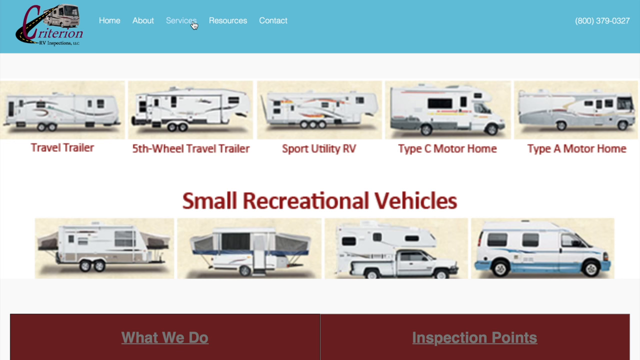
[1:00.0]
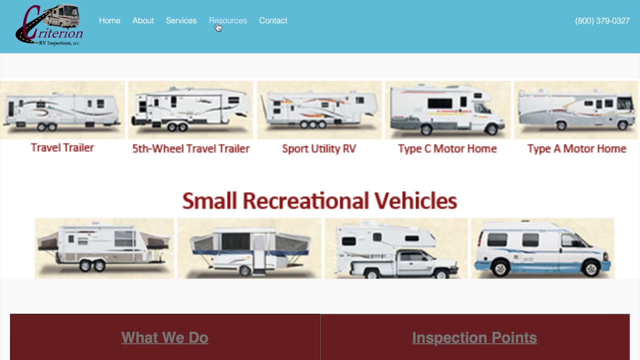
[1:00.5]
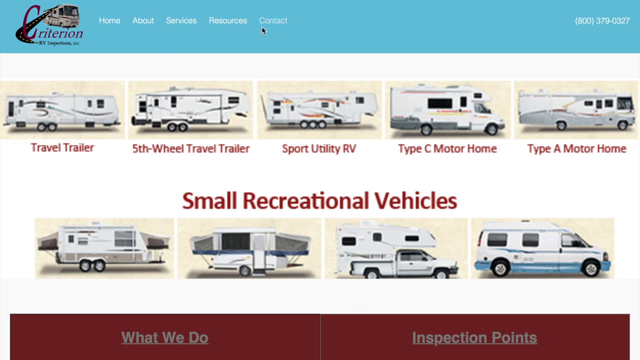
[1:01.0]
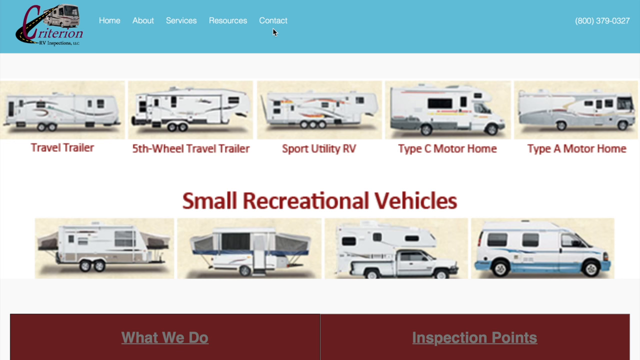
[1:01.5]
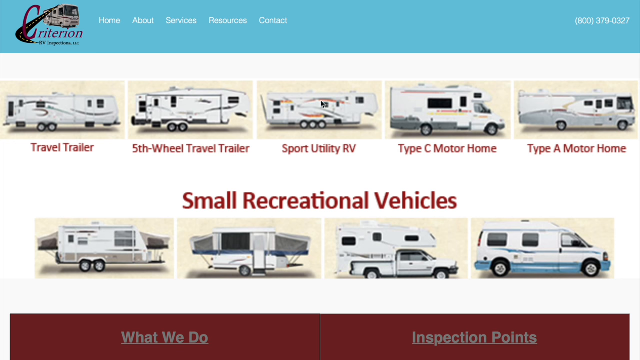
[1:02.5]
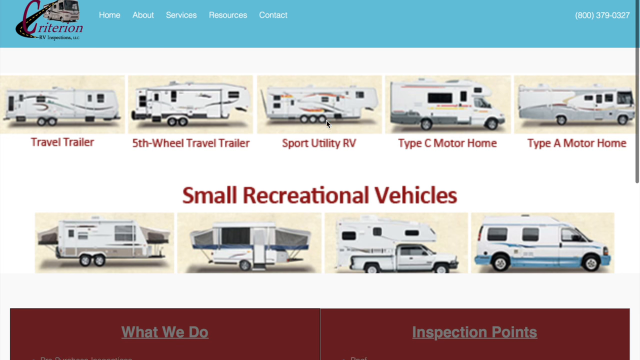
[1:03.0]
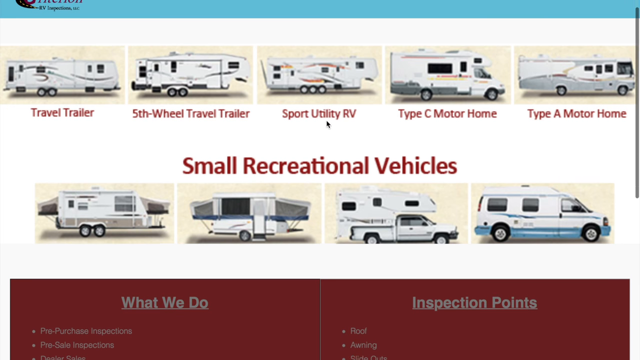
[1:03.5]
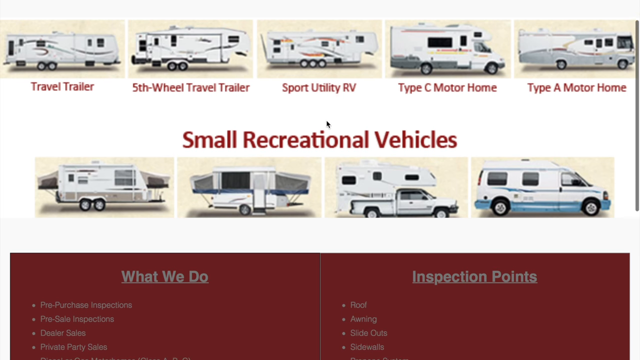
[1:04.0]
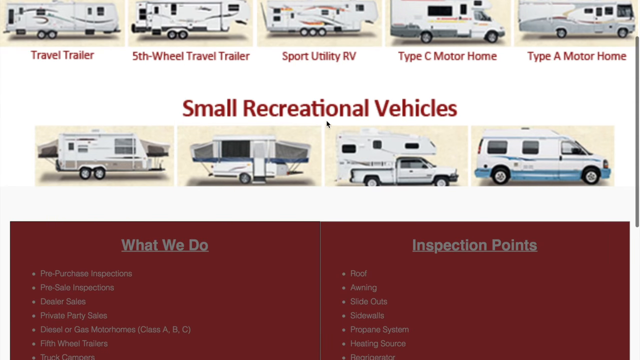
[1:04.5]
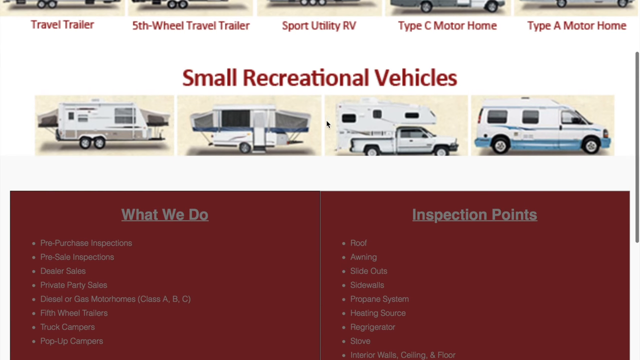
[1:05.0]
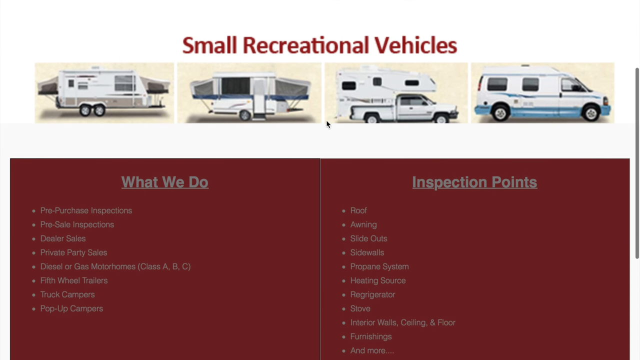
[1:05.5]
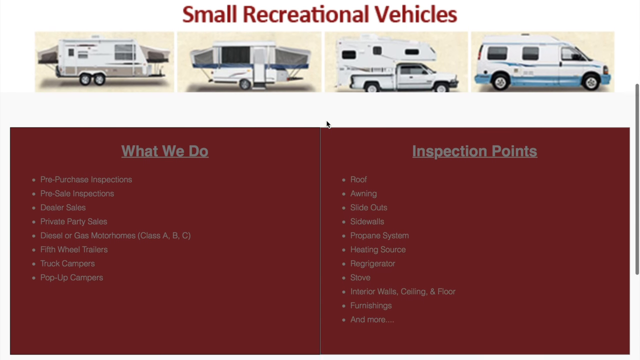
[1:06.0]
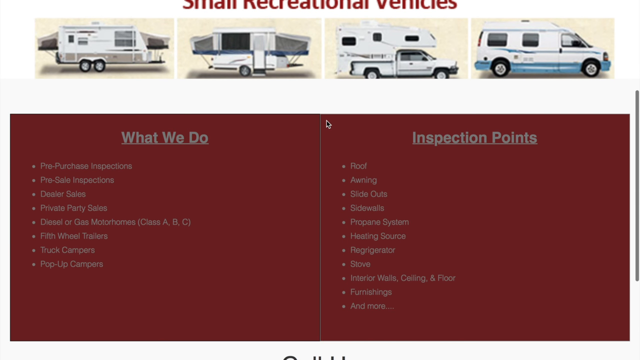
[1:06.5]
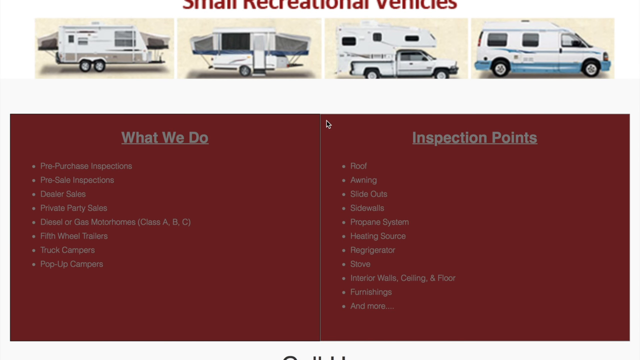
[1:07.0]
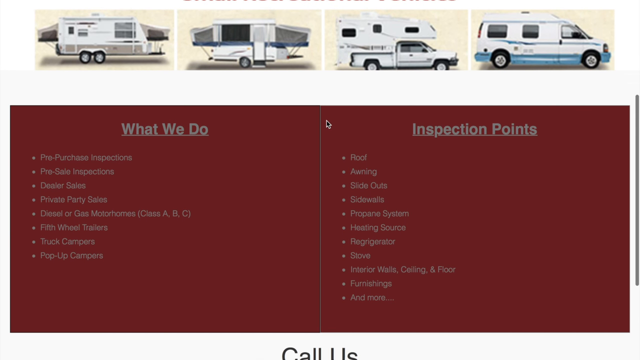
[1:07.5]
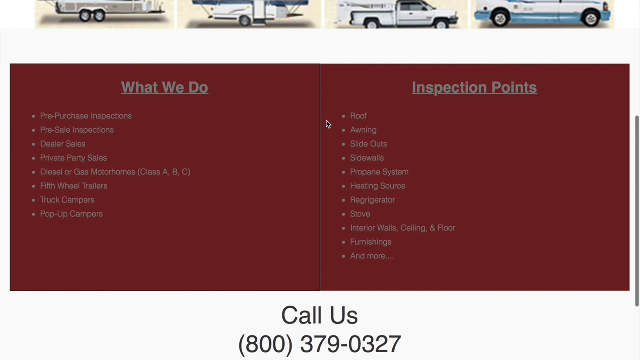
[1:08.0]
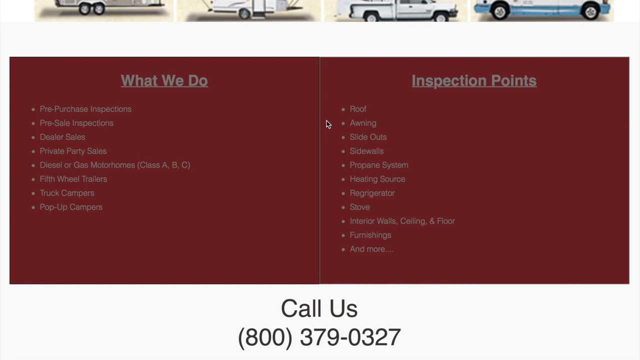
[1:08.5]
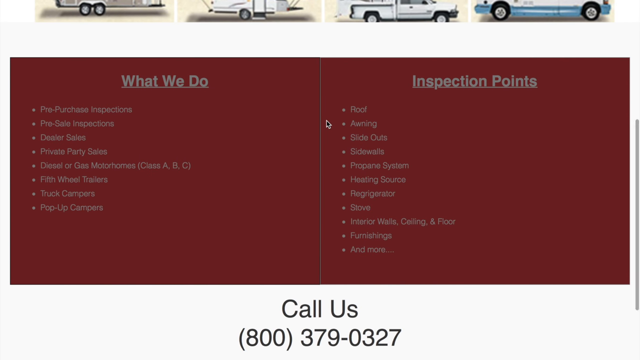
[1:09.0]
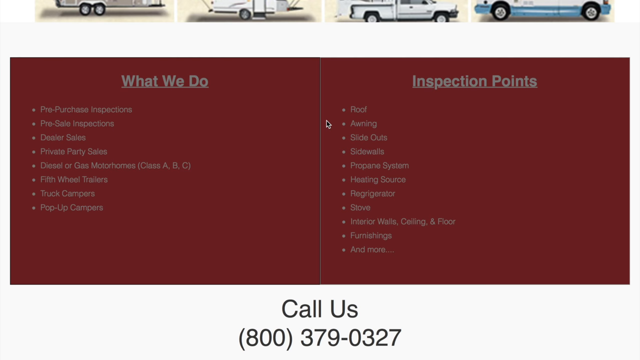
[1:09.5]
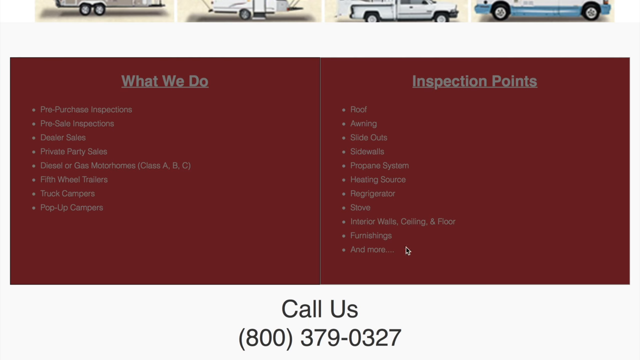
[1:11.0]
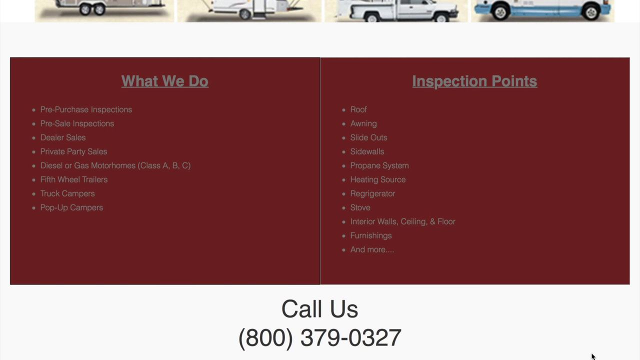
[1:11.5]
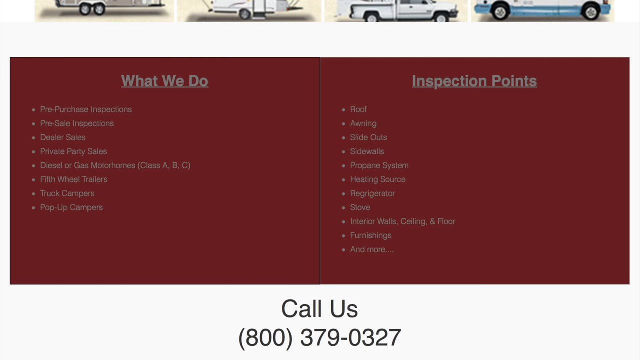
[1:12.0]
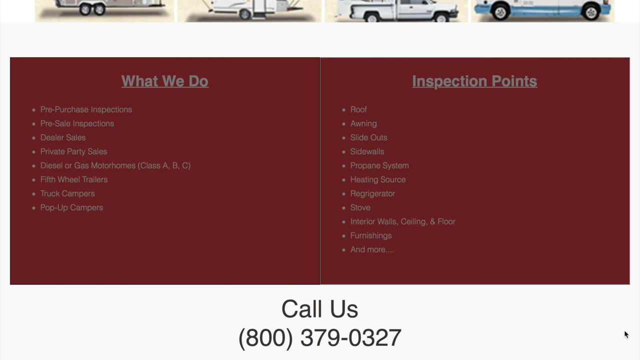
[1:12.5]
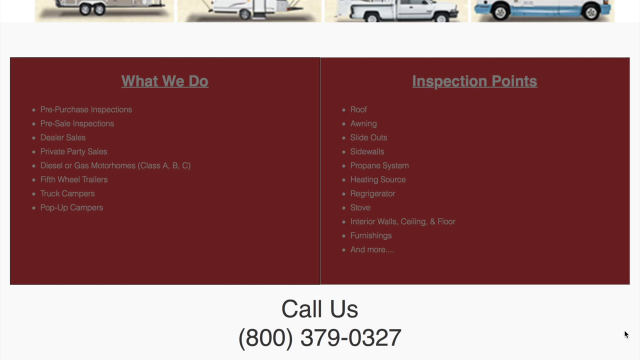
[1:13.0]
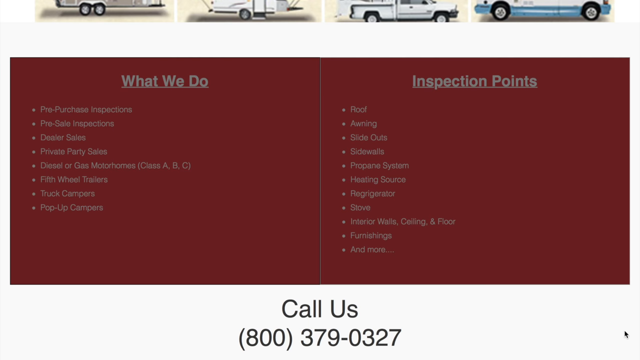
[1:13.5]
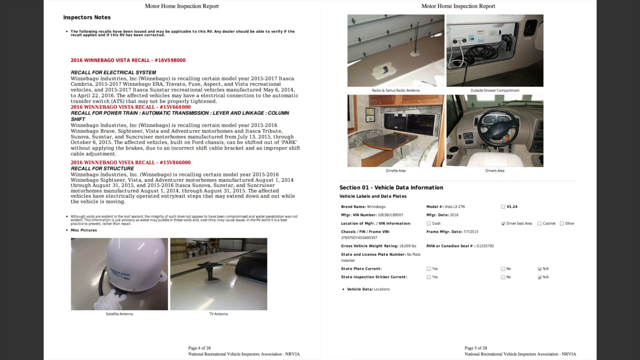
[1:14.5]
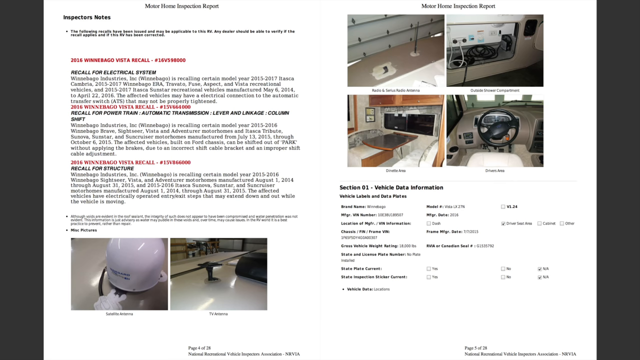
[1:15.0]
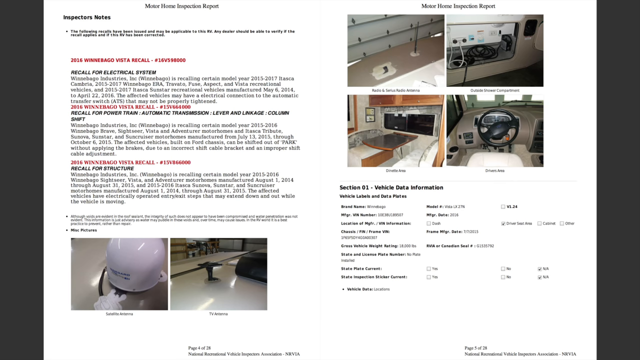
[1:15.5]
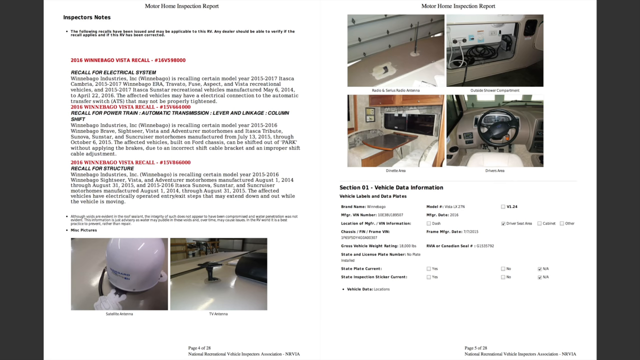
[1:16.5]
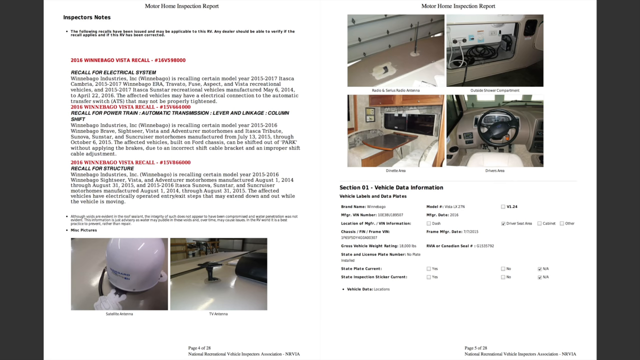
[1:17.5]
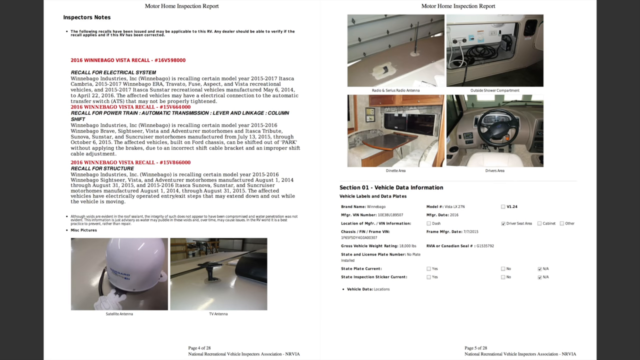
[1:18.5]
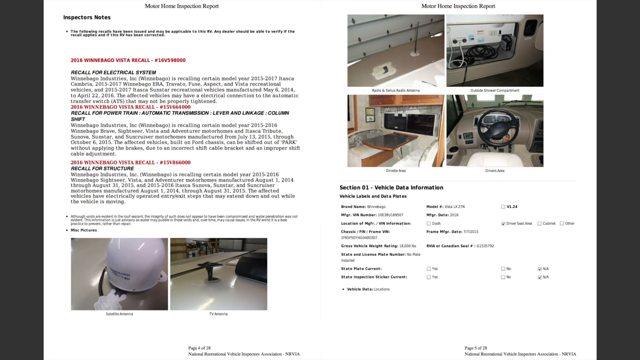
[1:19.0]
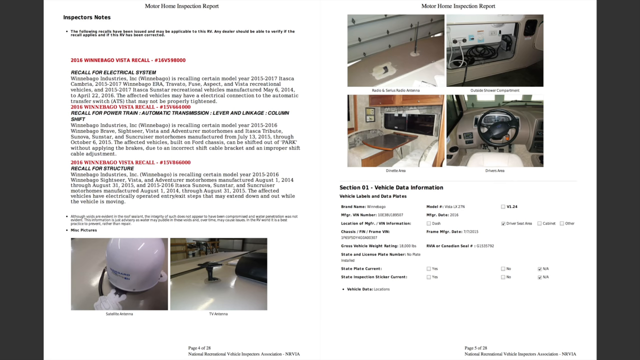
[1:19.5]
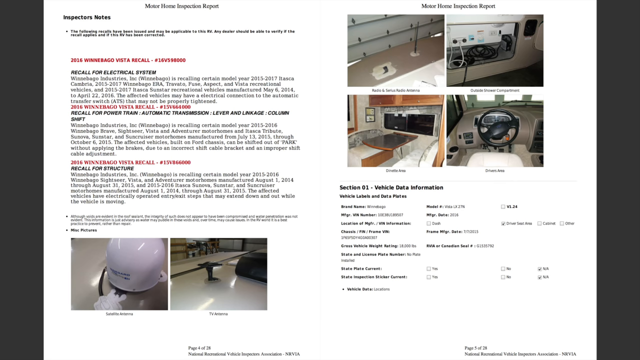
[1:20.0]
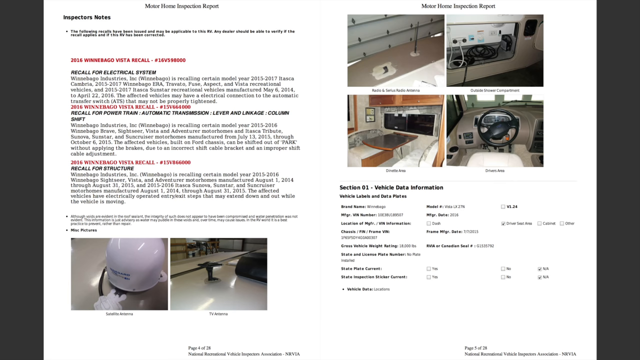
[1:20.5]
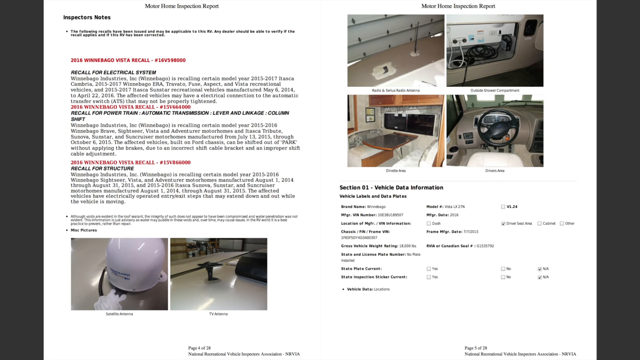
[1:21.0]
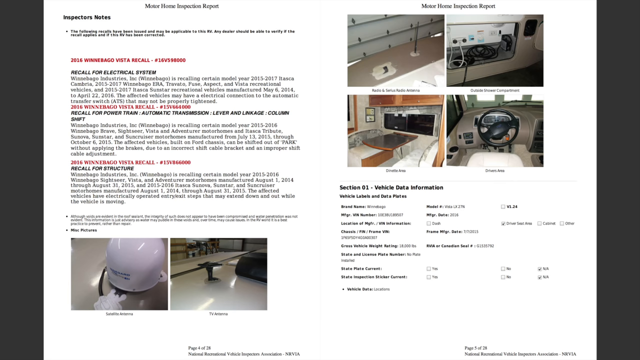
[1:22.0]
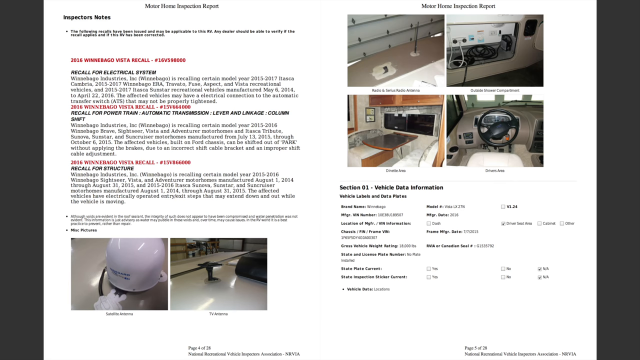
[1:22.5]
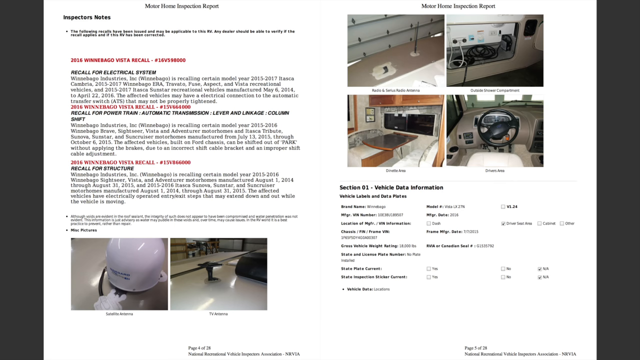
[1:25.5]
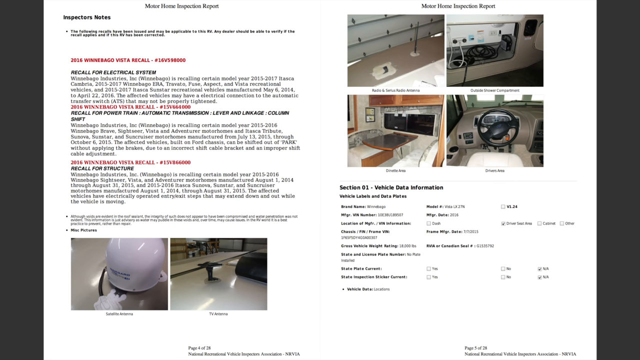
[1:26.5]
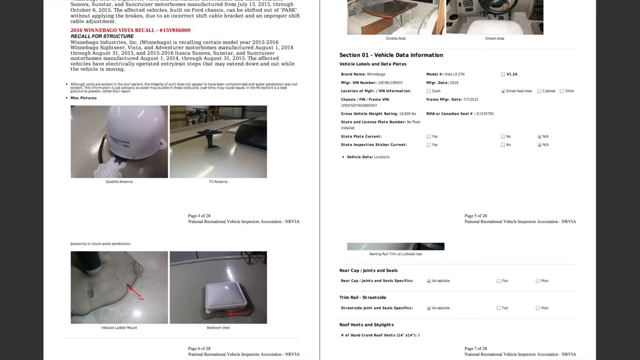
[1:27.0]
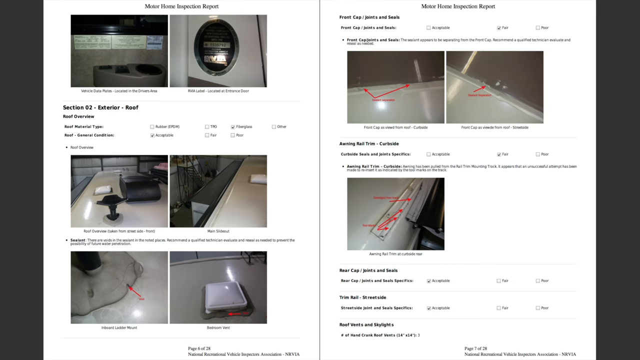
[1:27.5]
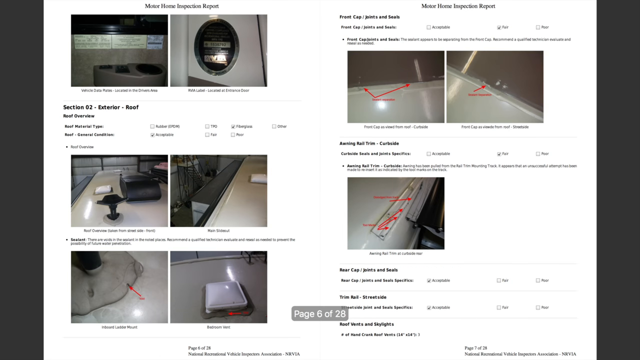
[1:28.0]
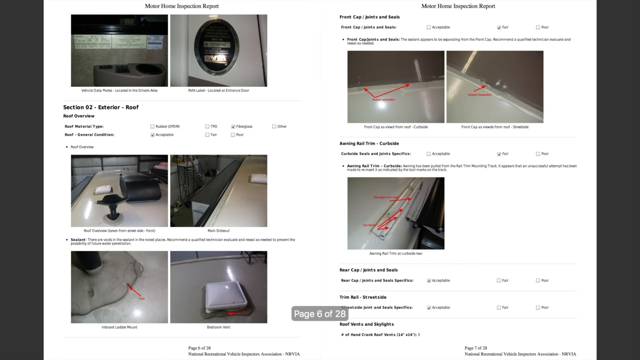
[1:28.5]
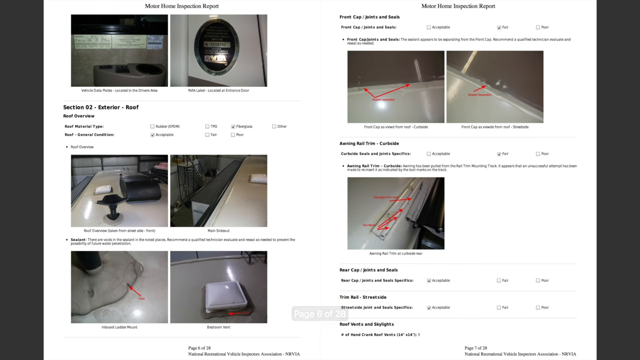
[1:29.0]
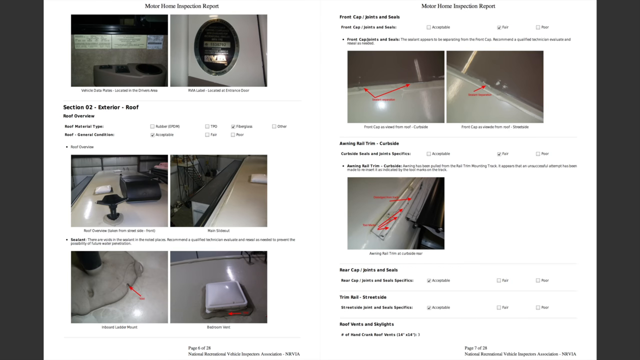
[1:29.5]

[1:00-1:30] The Services page shows several options; it looks like different types of RVs can be rented or bought. Listed are travel trailers, fifth wheel travel trailer, sport utility RV, type C motorhome and type A motorhome. Another section covers small recreational vehicles. At the bottom are two sections, "what we do" and "inspection points", on the left and right, each with bullet points listed below it, and there is also a number at the bottom to call for more information. The video then moves to another screen showing what look to be informational pages, several sheets of information.